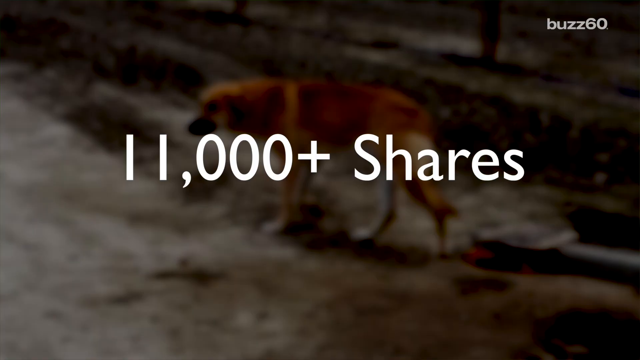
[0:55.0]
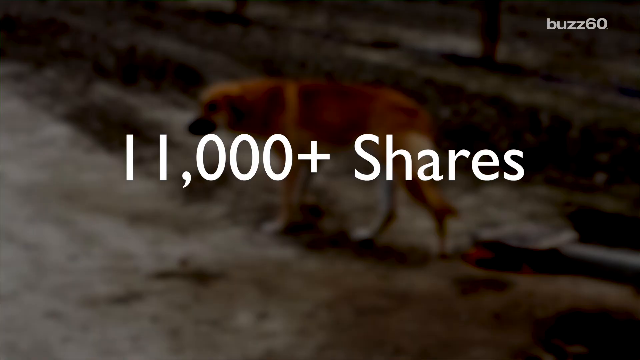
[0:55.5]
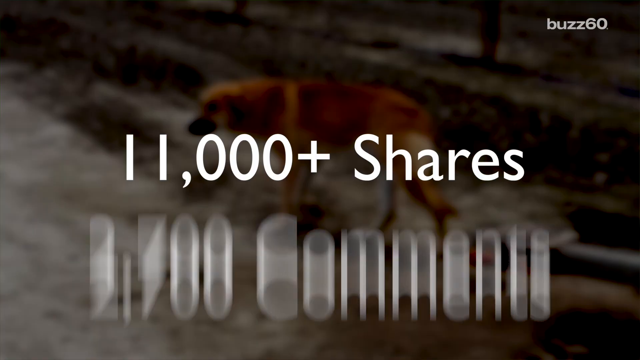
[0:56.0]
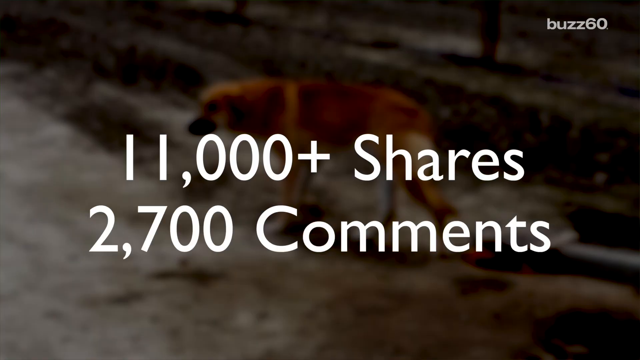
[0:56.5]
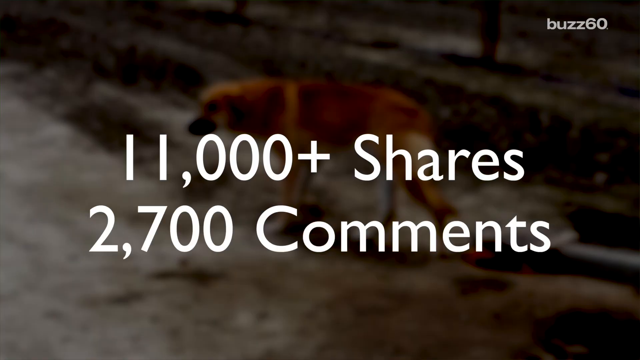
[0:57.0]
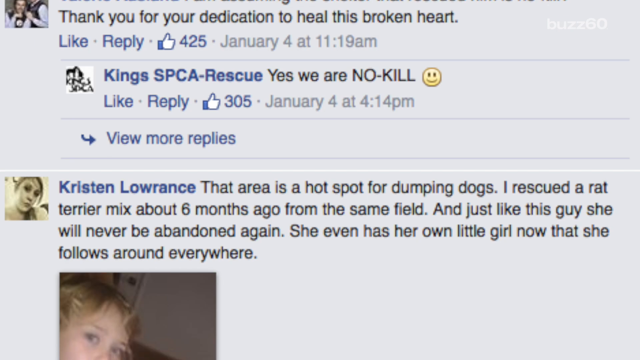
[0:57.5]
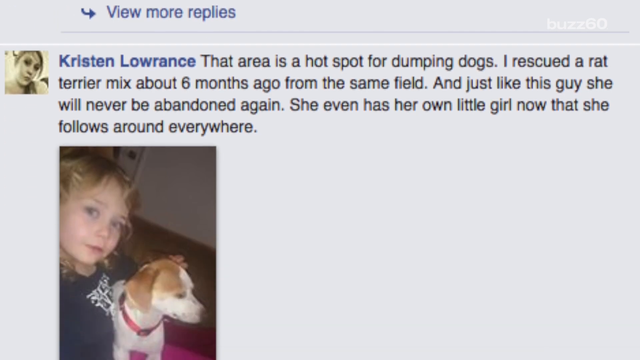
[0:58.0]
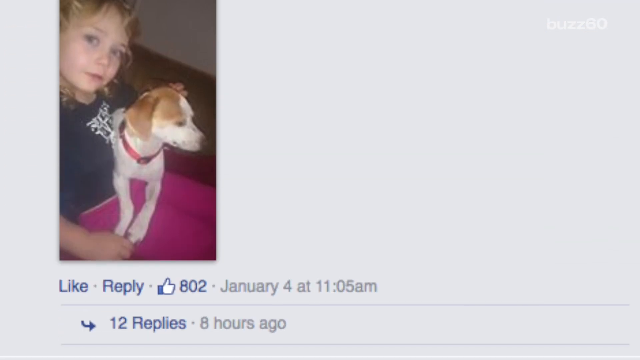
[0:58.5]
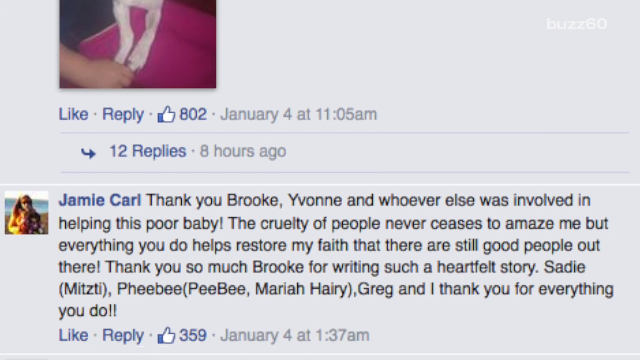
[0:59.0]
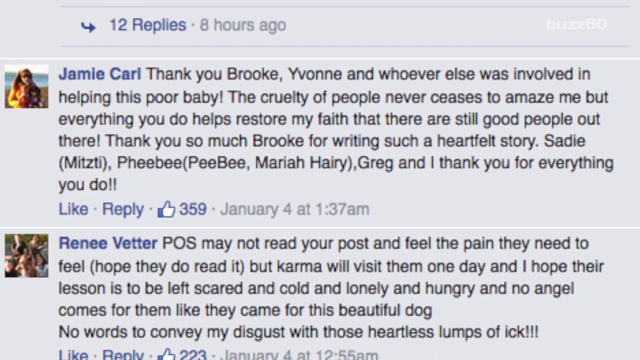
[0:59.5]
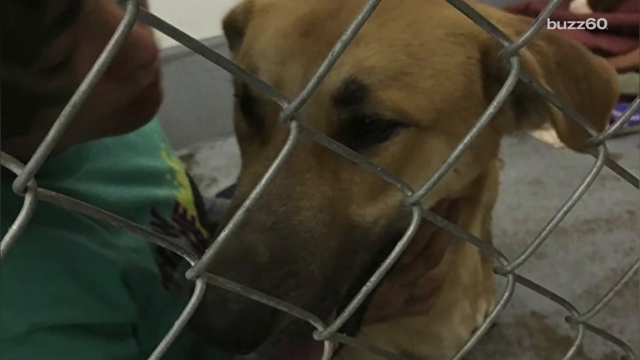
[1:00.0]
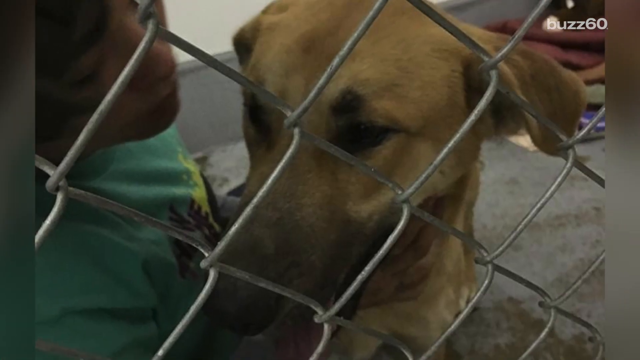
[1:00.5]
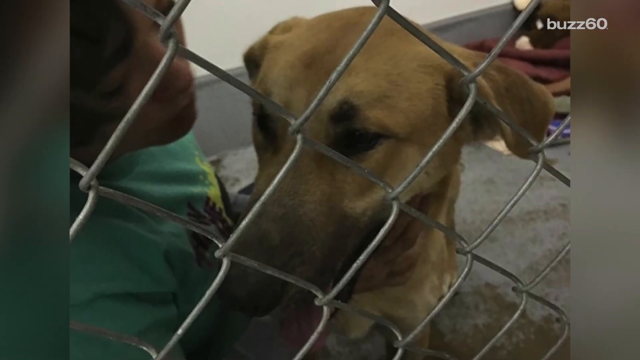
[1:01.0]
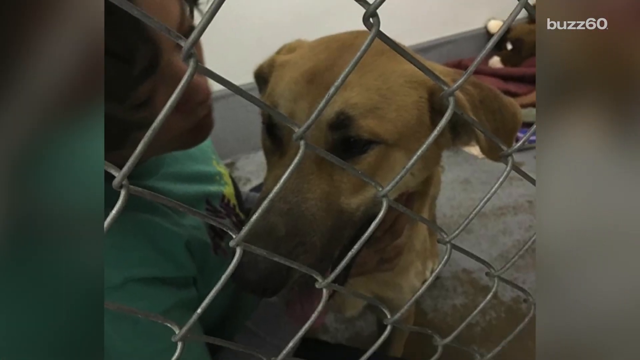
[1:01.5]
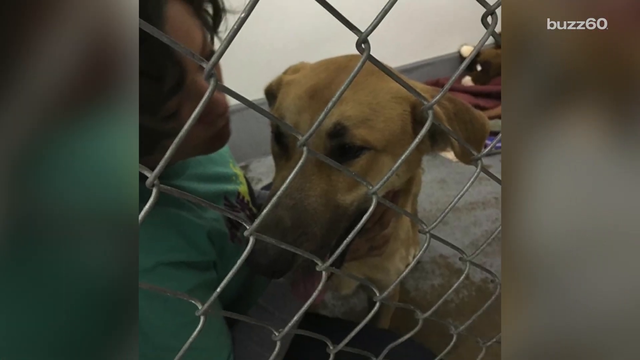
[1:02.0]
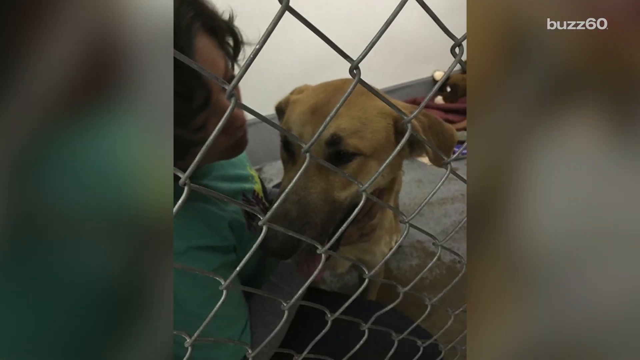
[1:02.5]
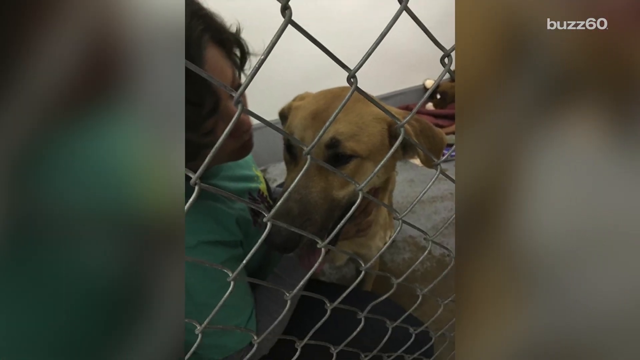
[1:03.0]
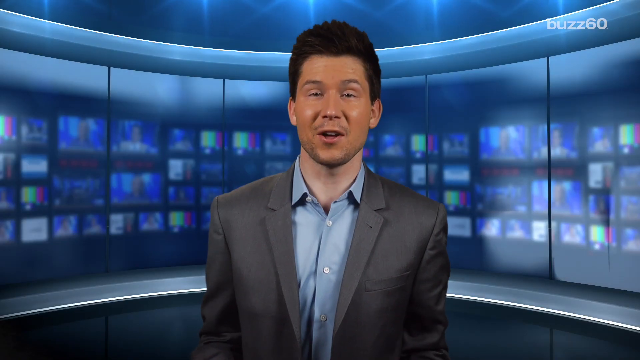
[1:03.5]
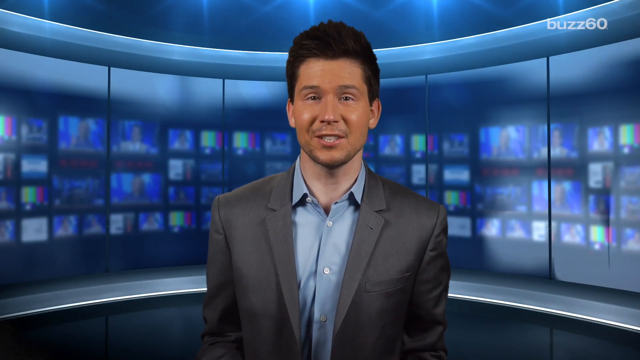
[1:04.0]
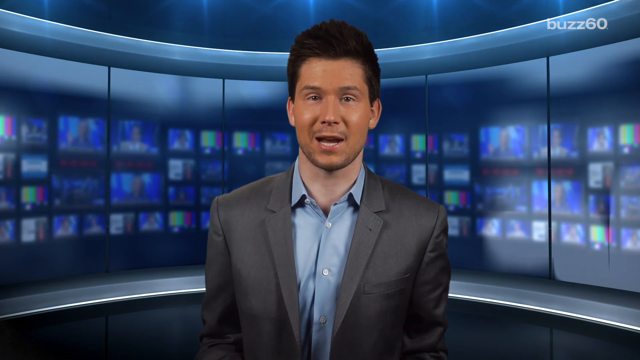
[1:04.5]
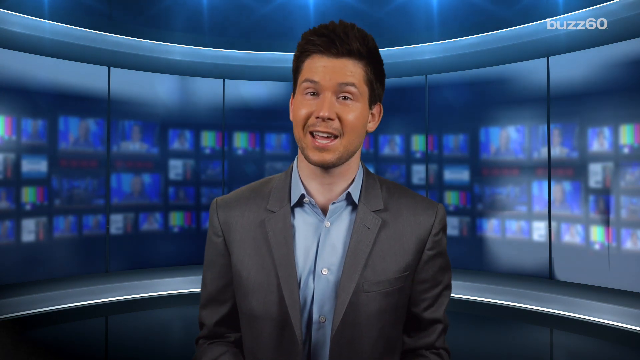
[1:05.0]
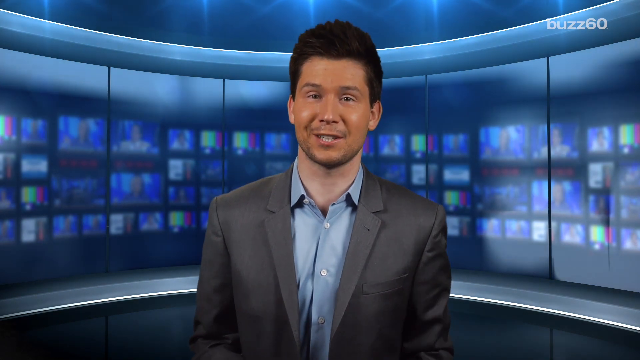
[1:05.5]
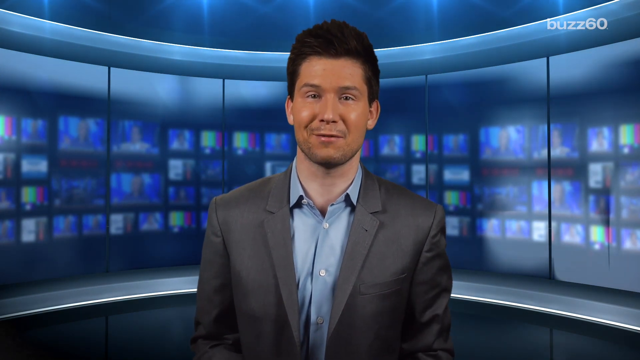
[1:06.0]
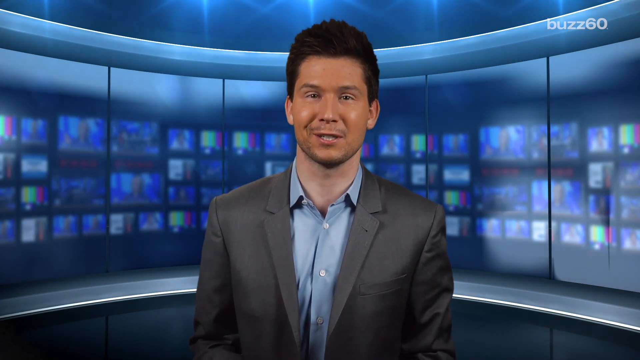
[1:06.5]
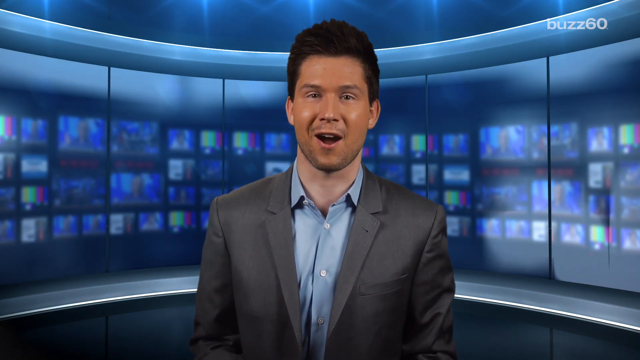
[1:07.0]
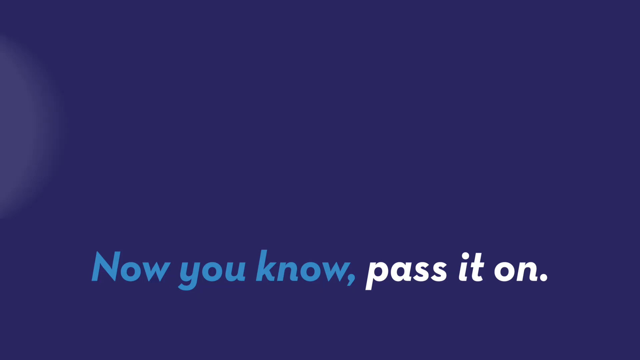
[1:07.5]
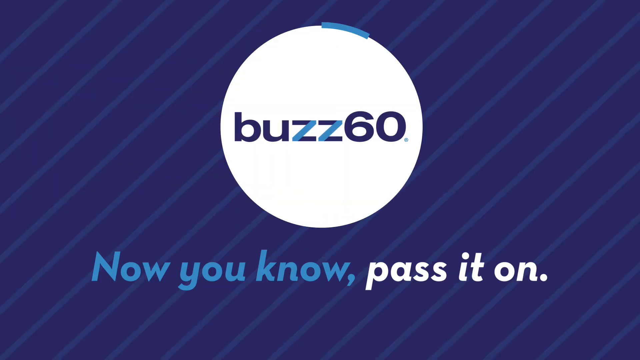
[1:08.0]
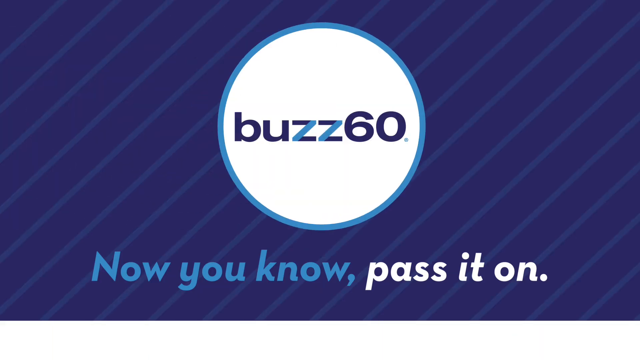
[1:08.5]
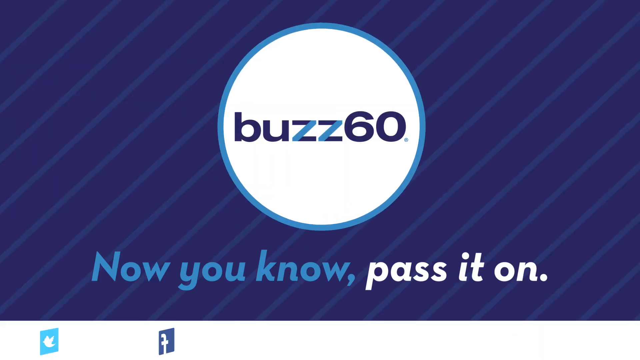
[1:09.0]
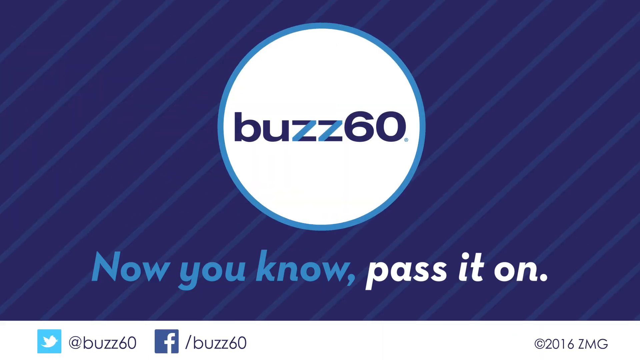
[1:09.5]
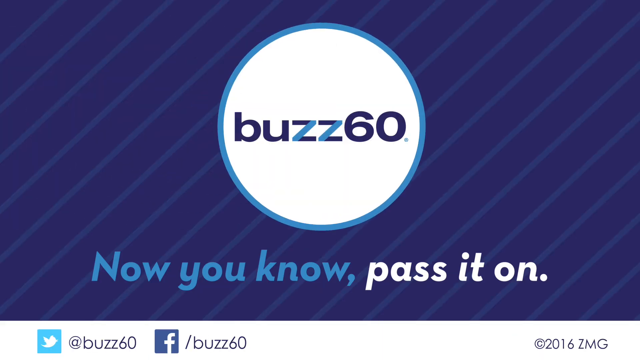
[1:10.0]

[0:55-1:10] The screen shows about 11,000 shares and almost 2,000 comments, along with a picture of a dog and someone else. The newscaster's studio appears, and a screen of some other chats is displayed as well. The newscaster is talking about shelters for dogs.